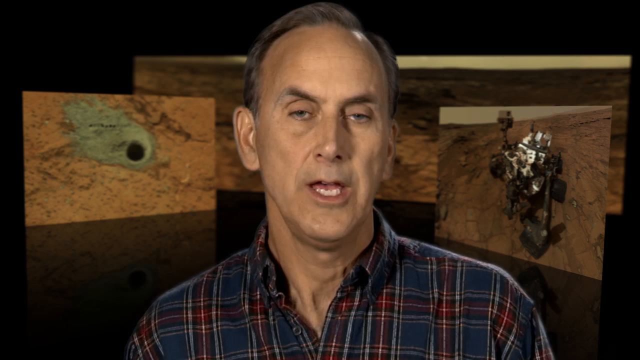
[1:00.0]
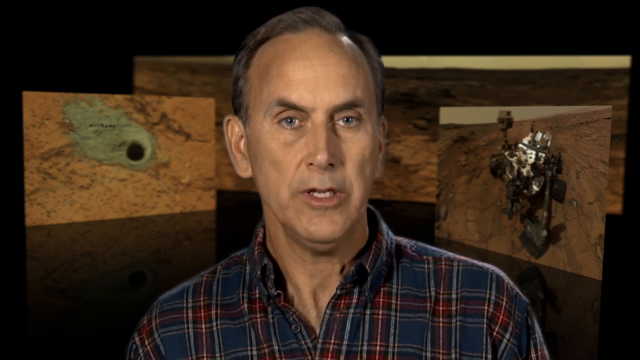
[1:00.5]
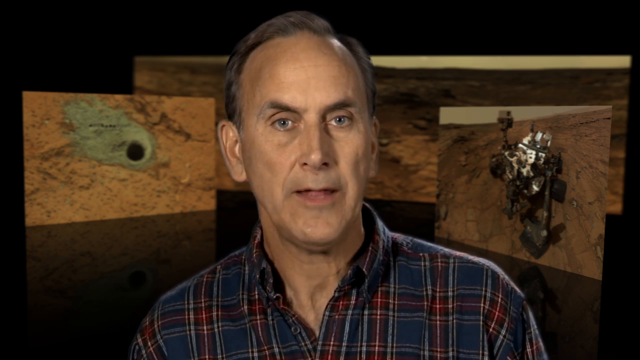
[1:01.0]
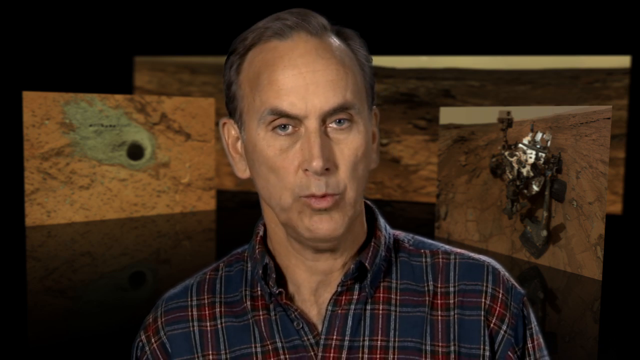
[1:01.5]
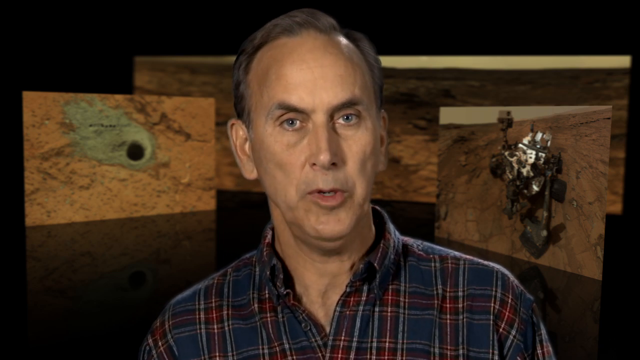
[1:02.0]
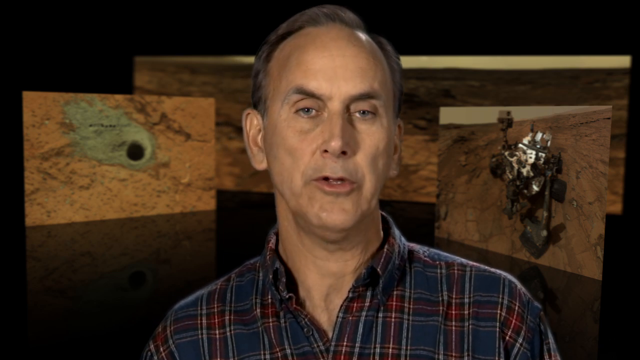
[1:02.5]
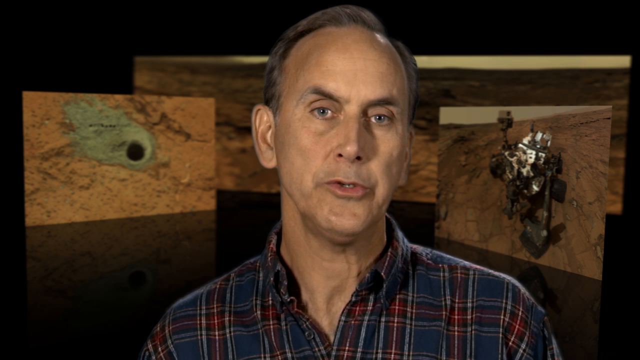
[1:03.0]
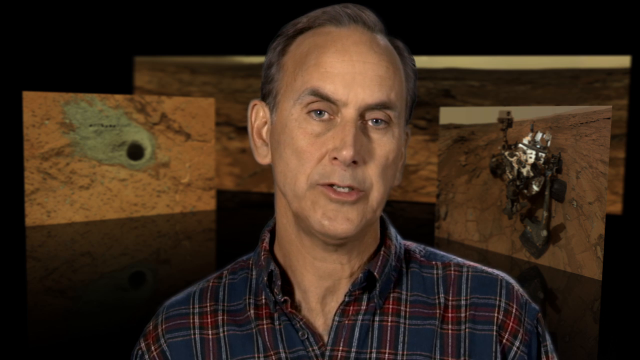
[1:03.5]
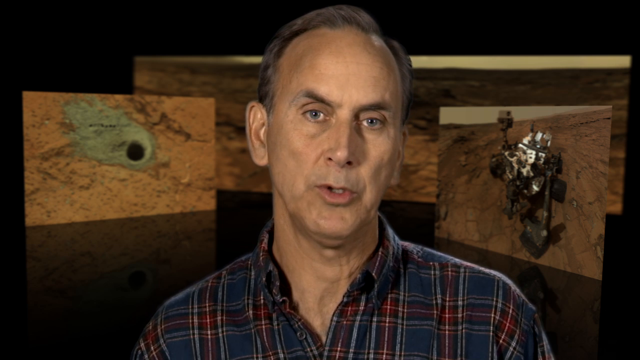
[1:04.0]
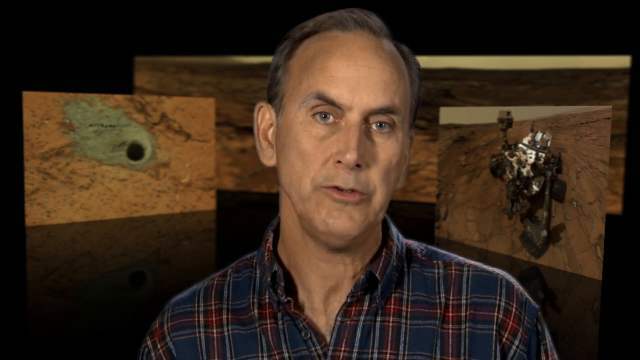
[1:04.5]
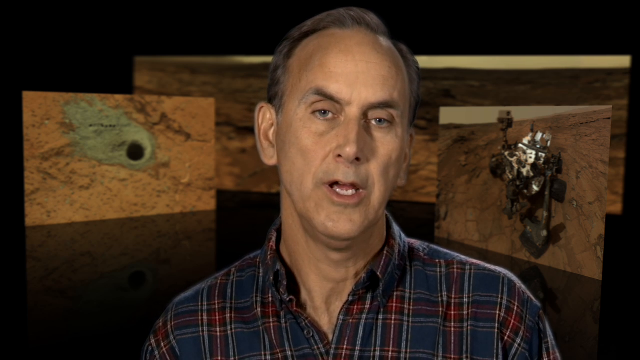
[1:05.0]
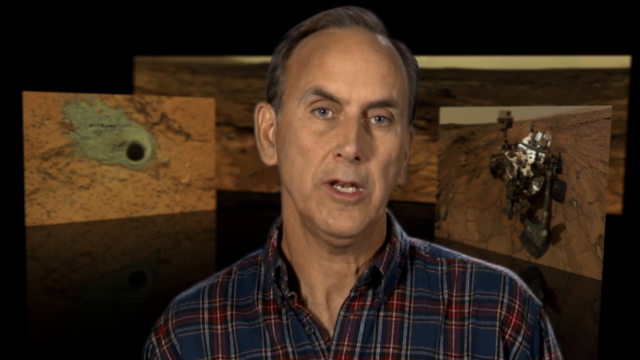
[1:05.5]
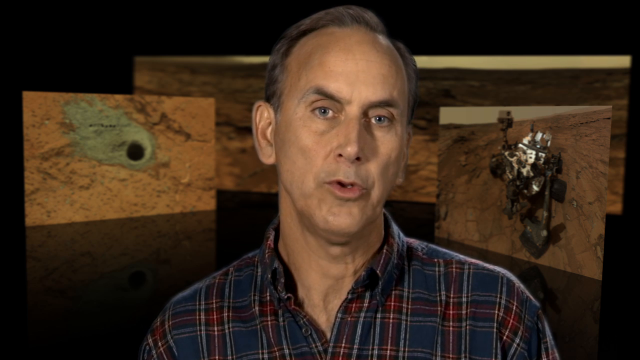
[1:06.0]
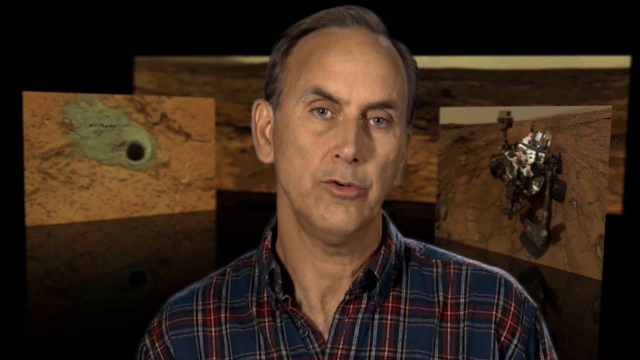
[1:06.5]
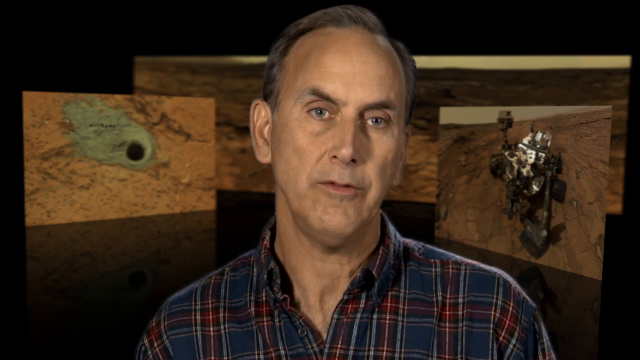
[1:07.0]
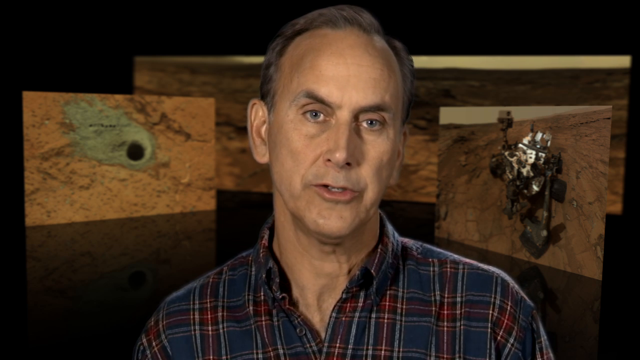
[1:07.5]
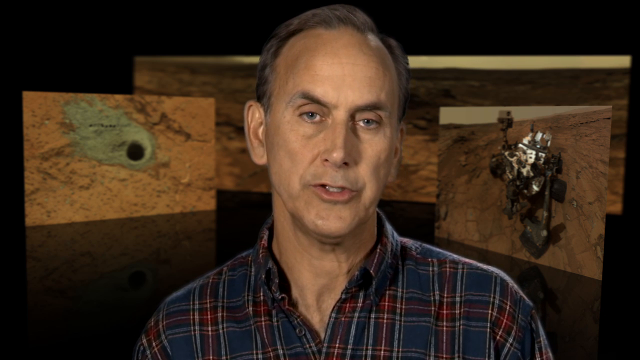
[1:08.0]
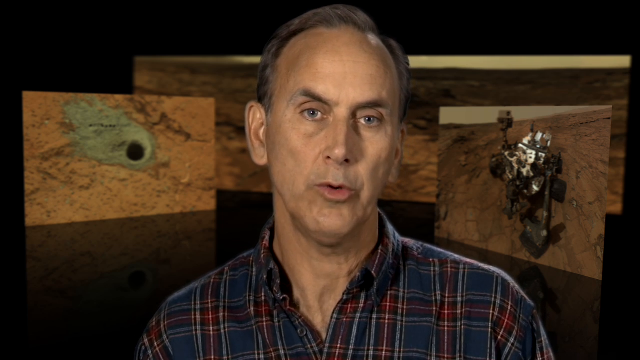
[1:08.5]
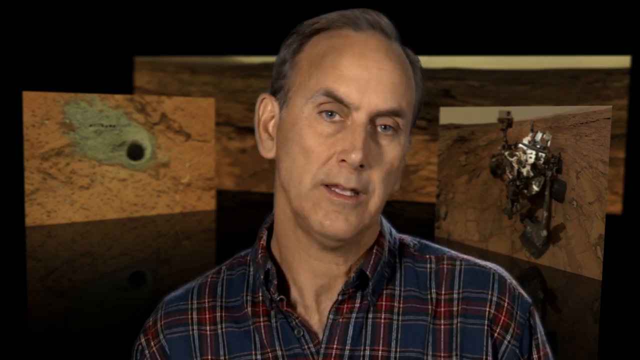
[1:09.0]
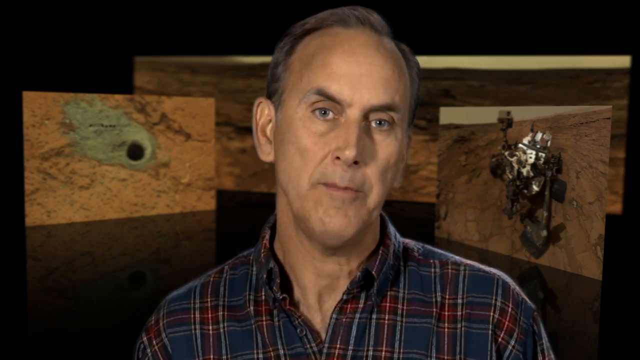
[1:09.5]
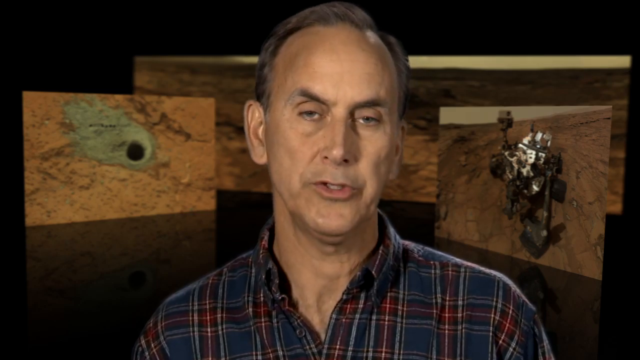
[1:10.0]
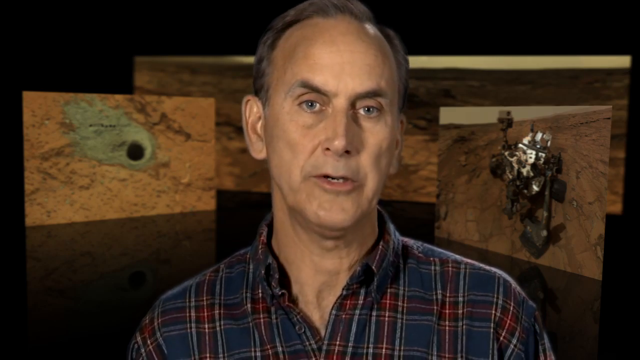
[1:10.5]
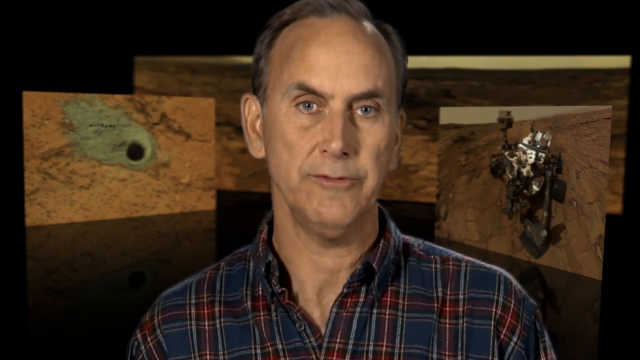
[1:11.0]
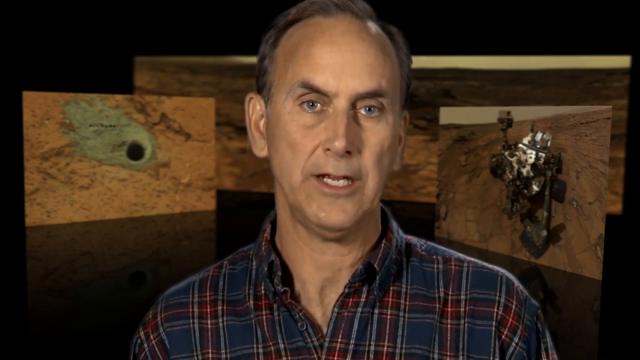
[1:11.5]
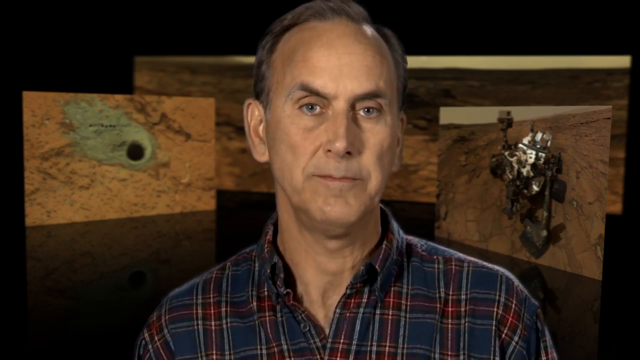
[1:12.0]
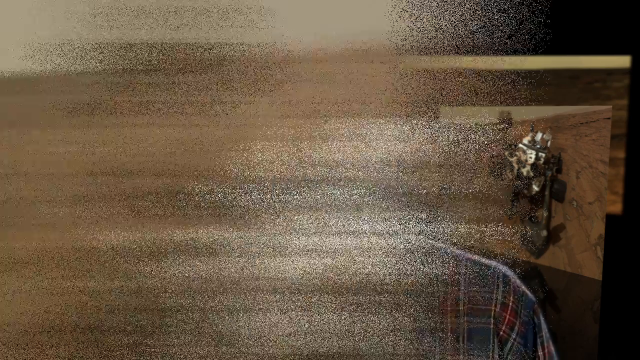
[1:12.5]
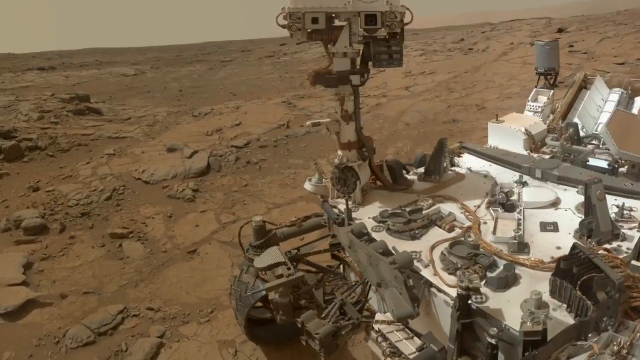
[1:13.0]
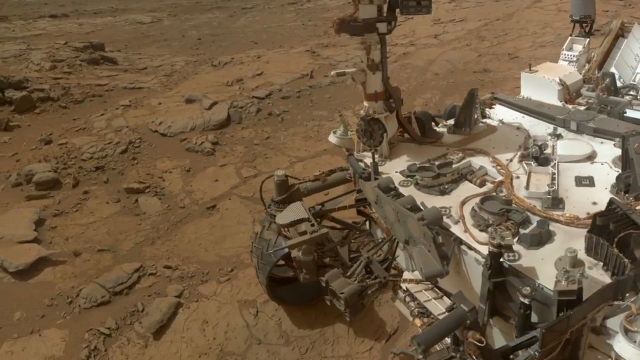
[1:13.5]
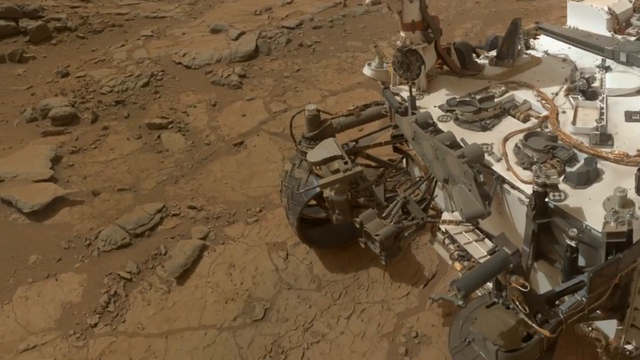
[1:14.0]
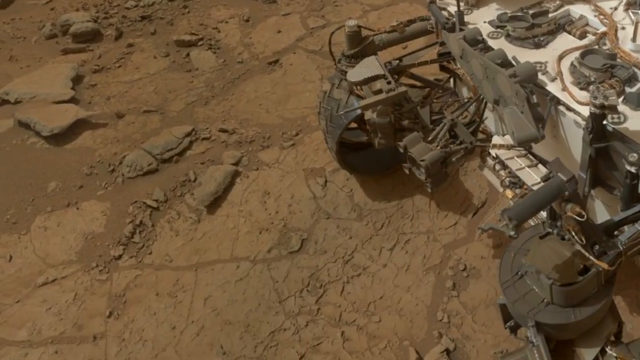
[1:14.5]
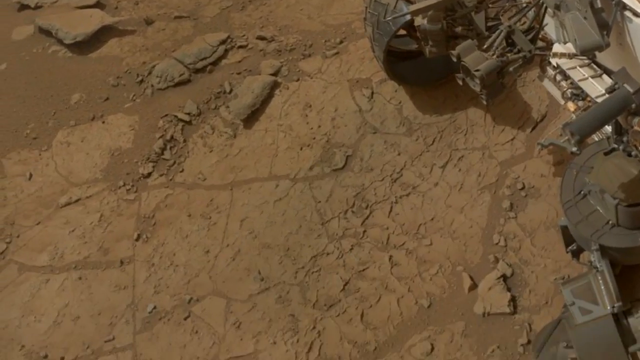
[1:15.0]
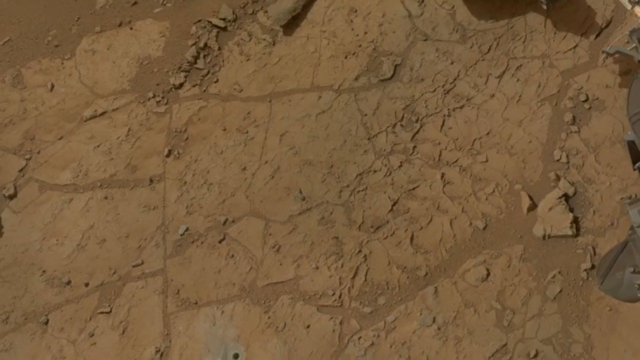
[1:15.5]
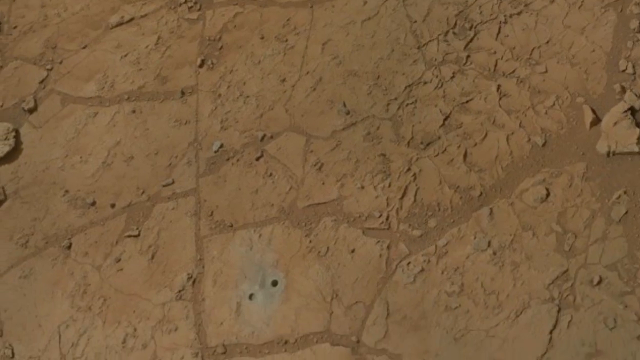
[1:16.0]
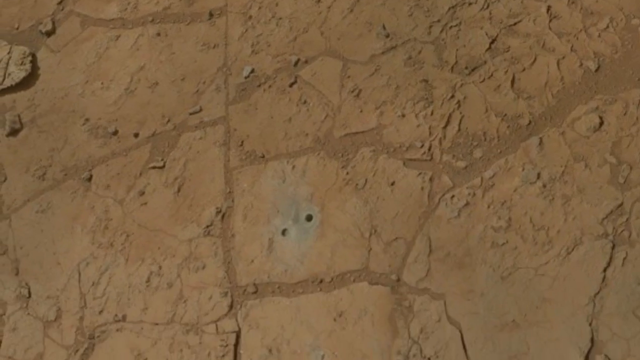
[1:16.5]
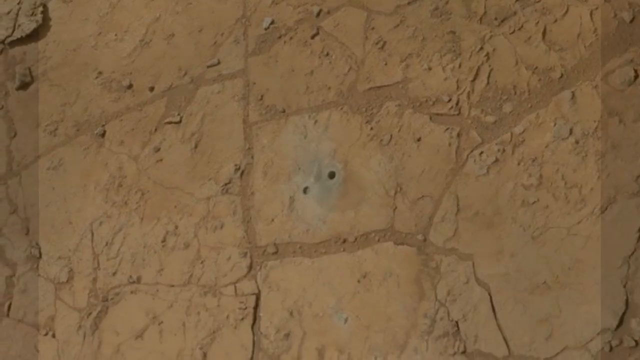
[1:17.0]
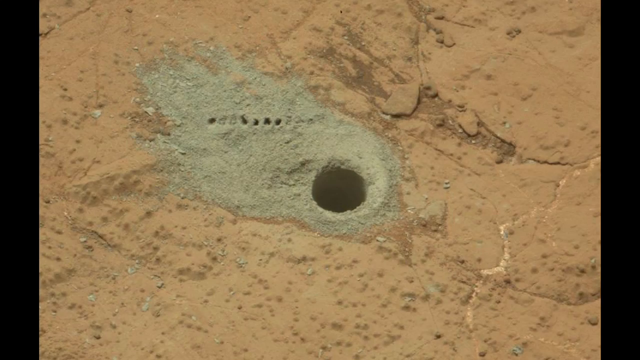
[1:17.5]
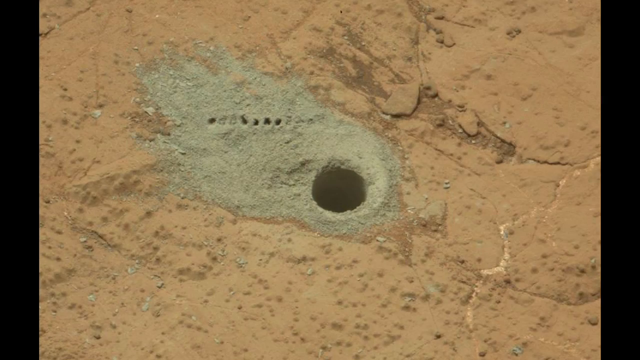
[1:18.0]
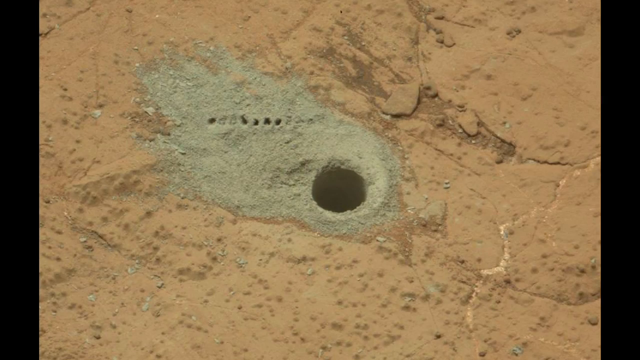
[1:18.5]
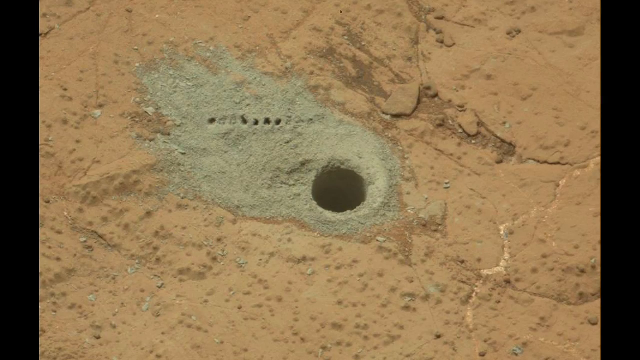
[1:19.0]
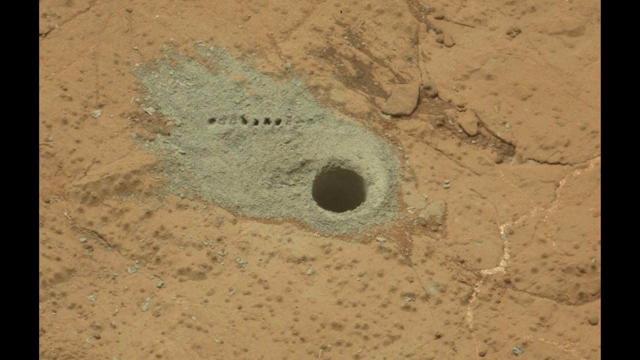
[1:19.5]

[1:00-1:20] The researcher talks in front of three photos from the exploration shown in the background. One focuses on a little green hole in Mars, and two other photos are also shown. The view returns to the hole. Another photo shows a big, gigantic piece of equipment, probably the SAM analysis instrument, maybe used to find or drill this hole in Mars. Of the three photos, one is the hole and one is the big equipment.